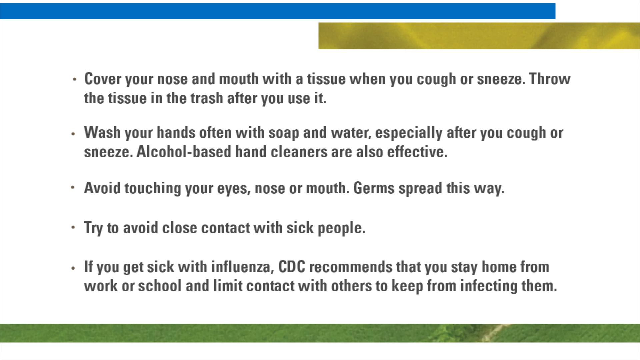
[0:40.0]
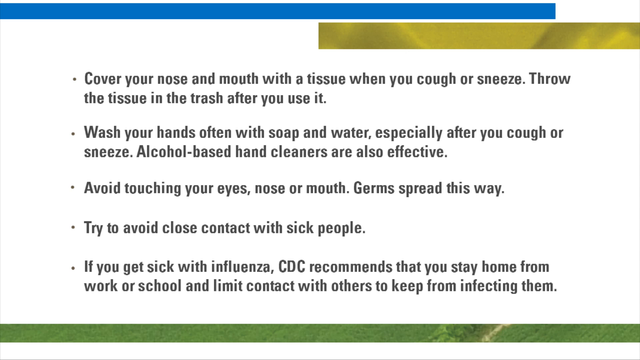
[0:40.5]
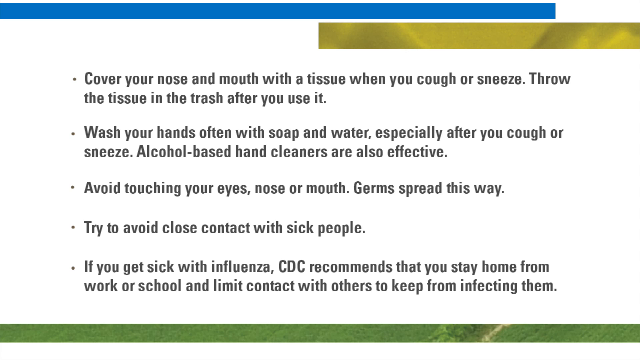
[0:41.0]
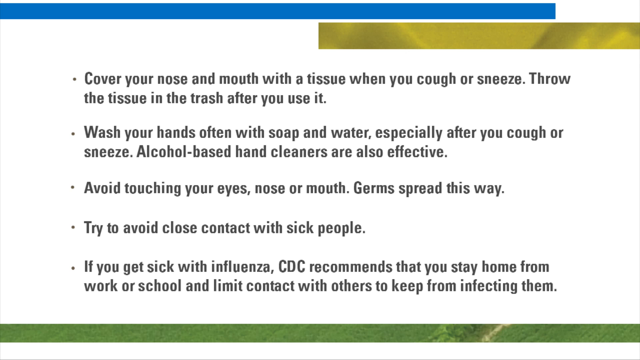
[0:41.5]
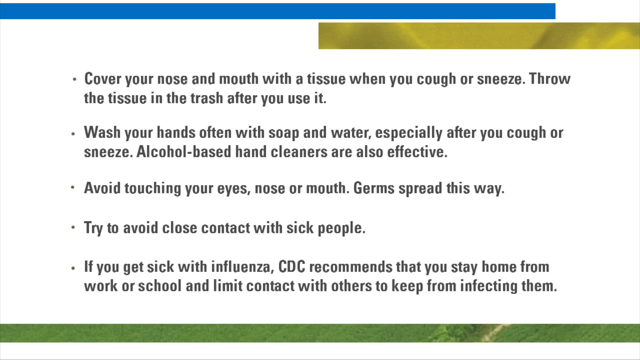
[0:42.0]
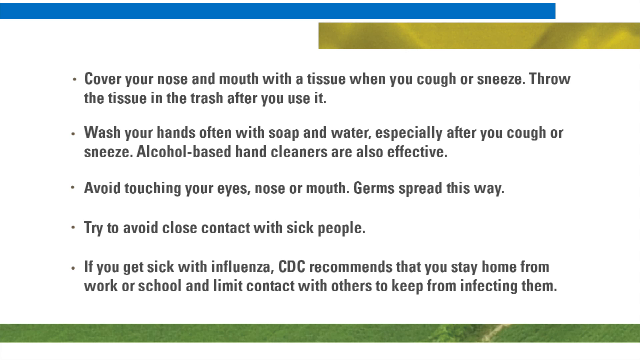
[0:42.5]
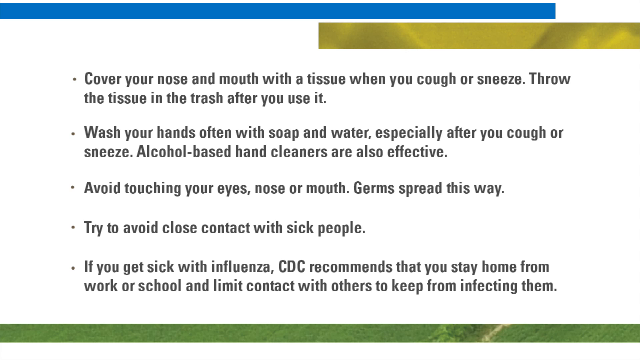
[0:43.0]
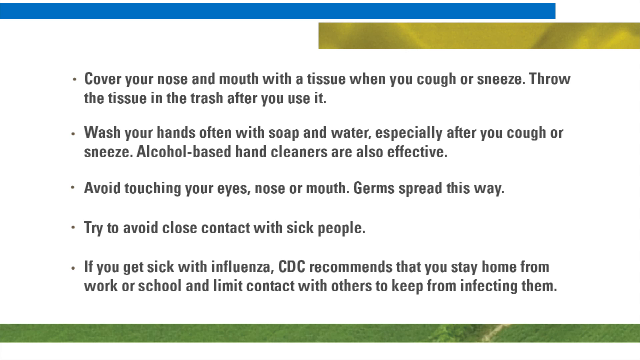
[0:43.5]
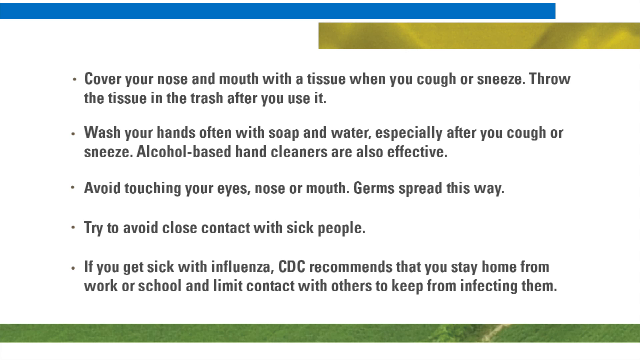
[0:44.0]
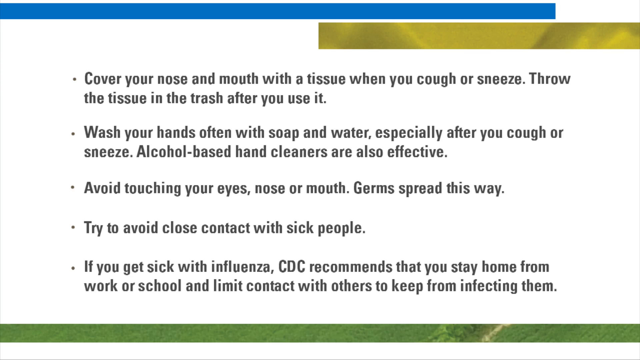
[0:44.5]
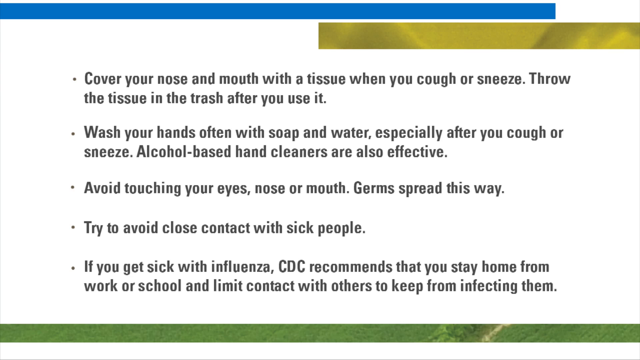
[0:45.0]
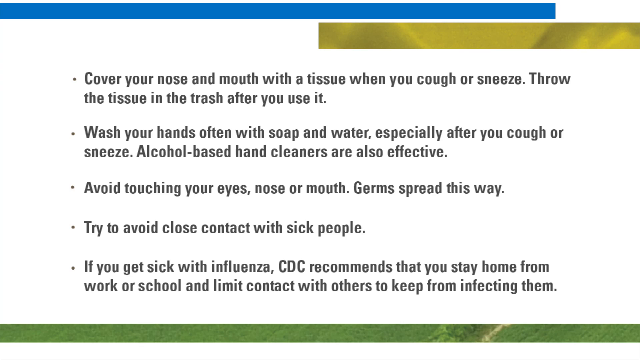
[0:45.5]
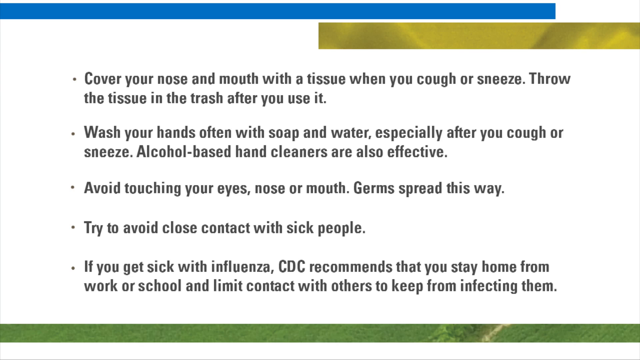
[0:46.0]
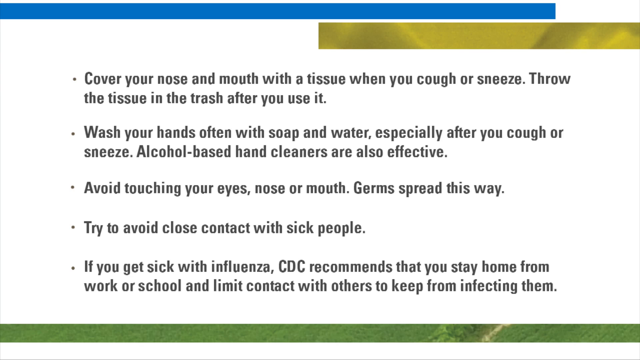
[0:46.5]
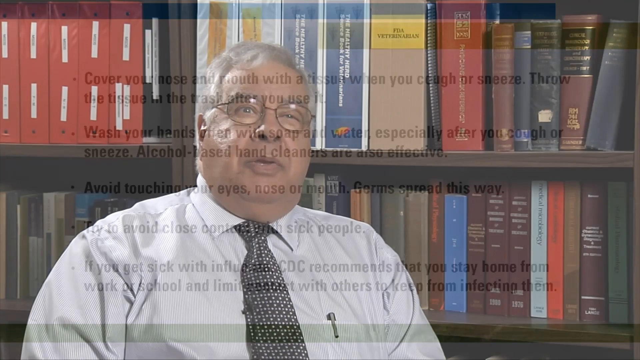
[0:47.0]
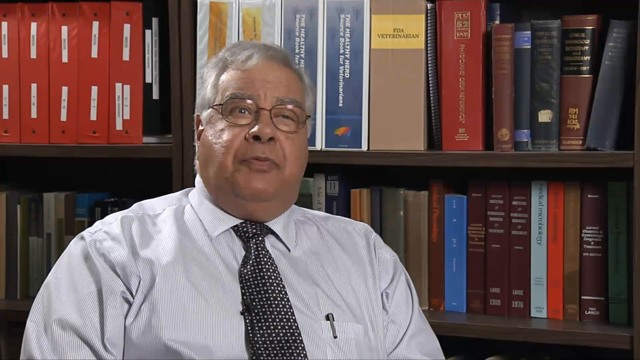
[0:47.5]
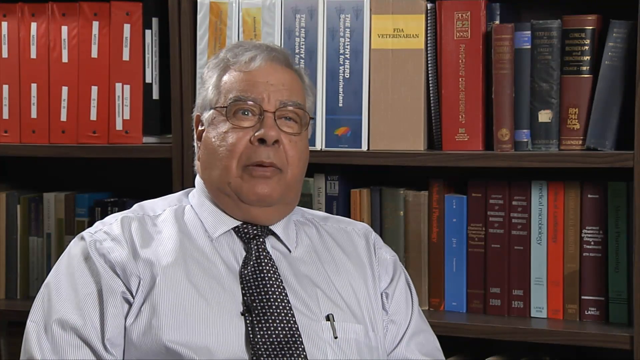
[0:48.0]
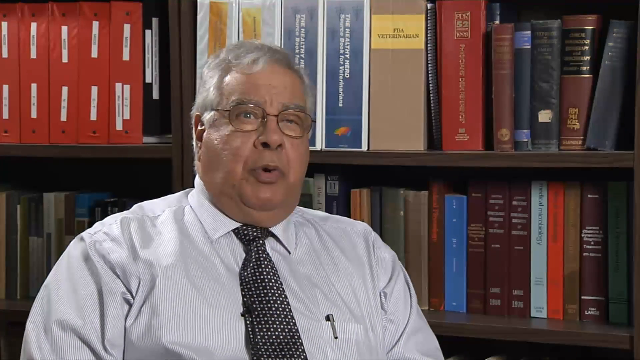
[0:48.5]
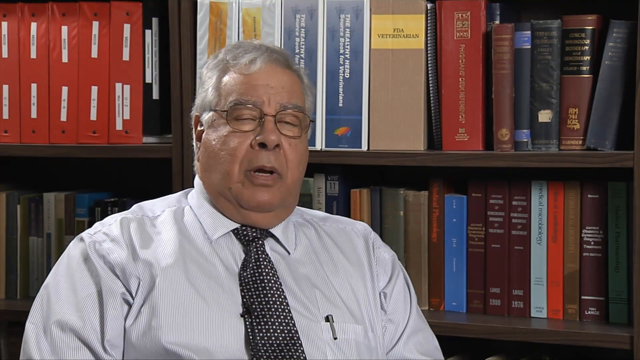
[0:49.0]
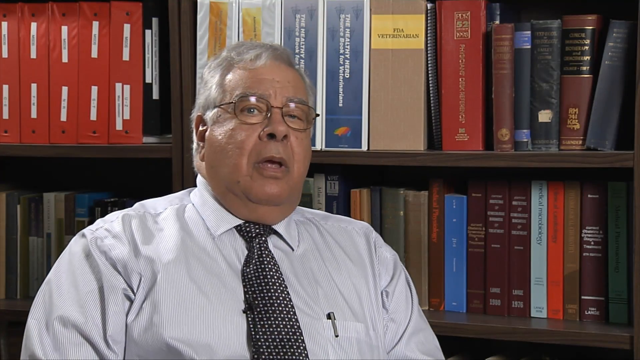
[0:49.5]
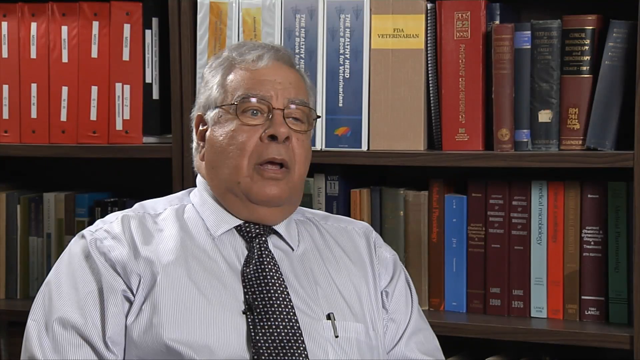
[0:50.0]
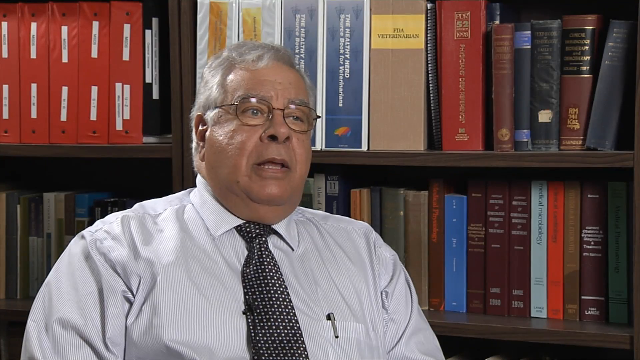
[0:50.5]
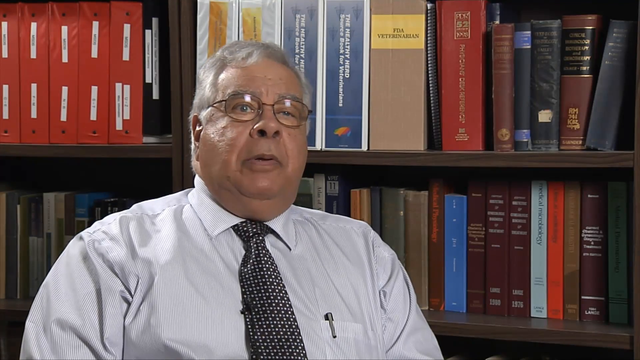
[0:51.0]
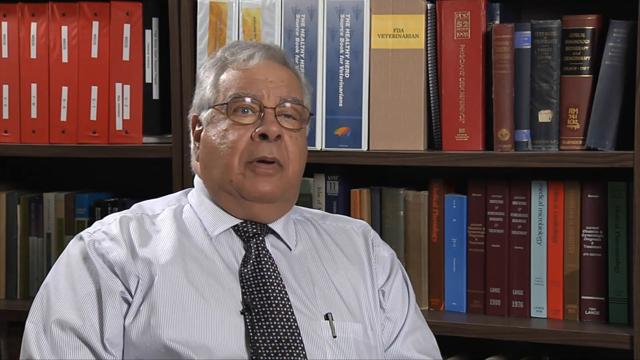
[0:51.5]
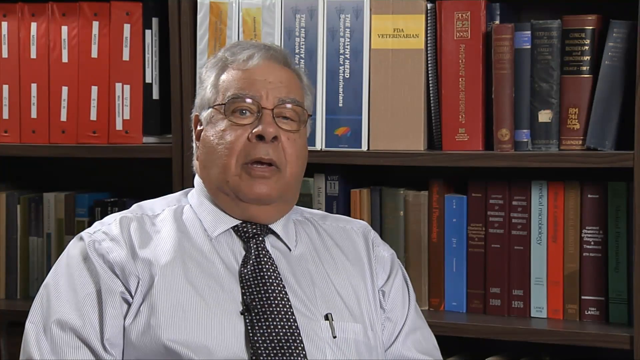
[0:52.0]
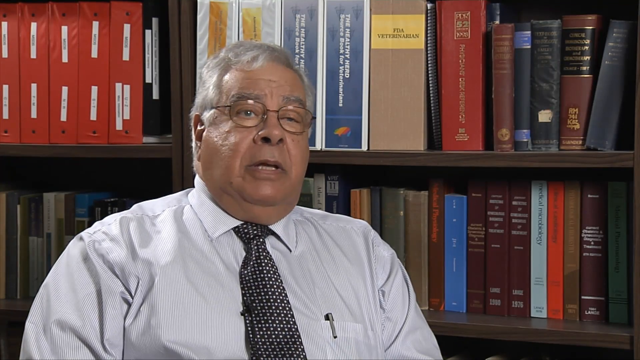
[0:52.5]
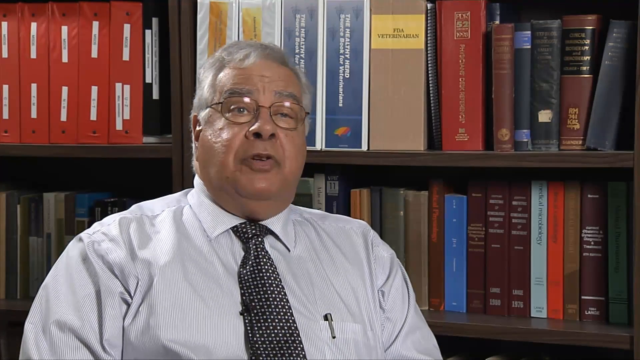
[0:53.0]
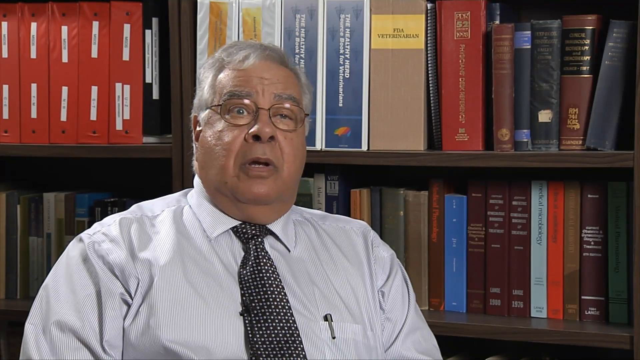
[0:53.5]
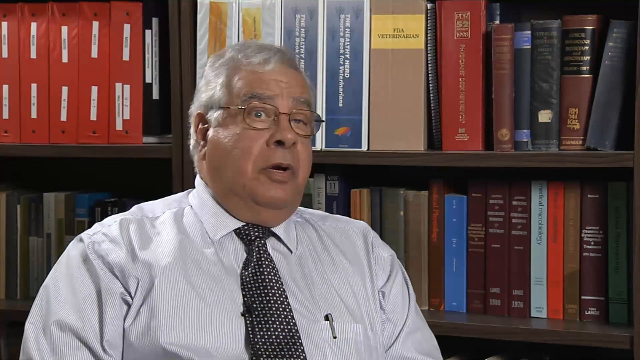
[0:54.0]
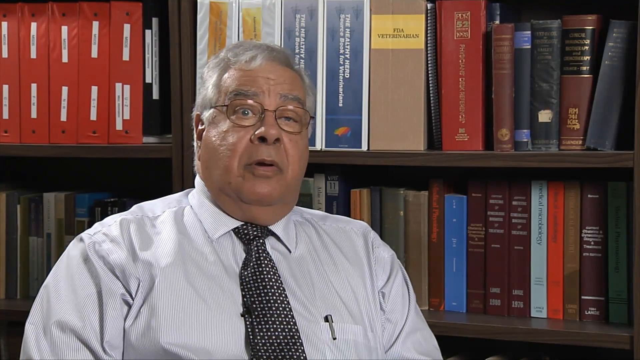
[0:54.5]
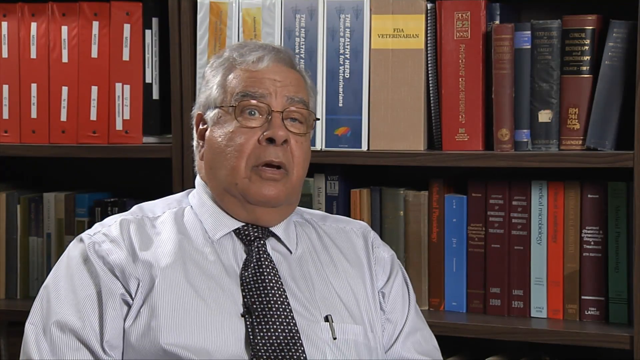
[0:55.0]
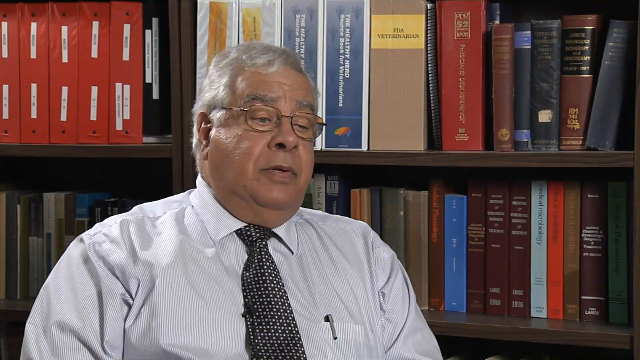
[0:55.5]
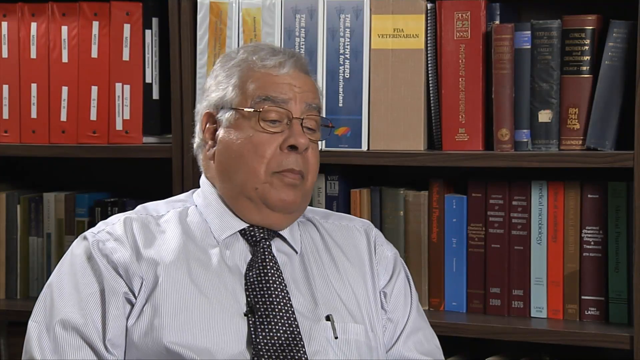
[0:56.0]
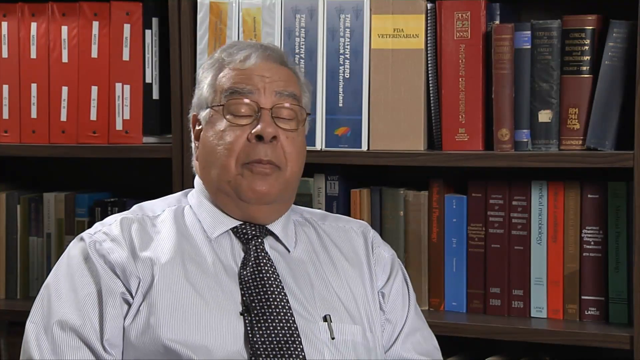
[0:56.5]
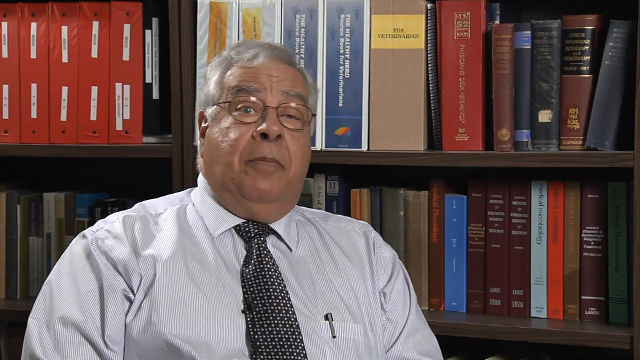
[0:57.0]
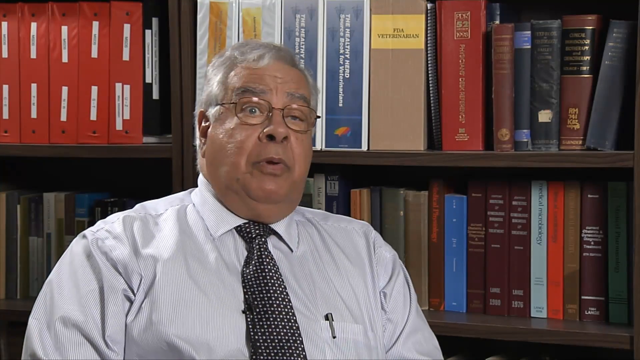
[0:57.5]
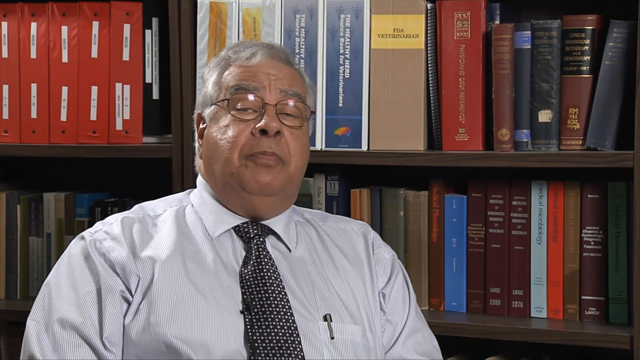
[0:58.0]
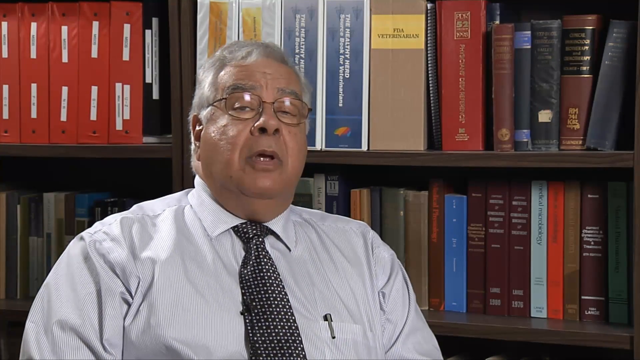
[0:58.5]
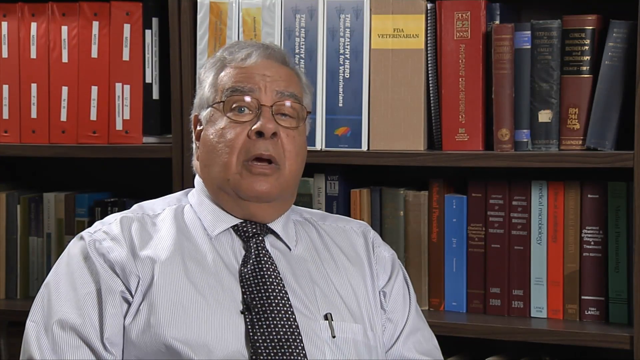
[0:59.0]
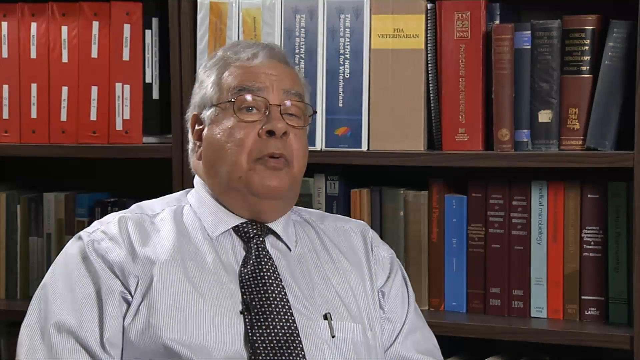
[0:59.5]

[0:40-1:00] The slide with bullet points about avoiding getting sick is on screen: covering your nose, washing your hands, avoiding touching your eyes, avoiding close contact with sick people, and staying home if sick. The video then cuts back to the same doctor being interviewed. He wears a white shirt, a tie and glasses, and the backdrop, which could be an office or a library, has lots of medical books.